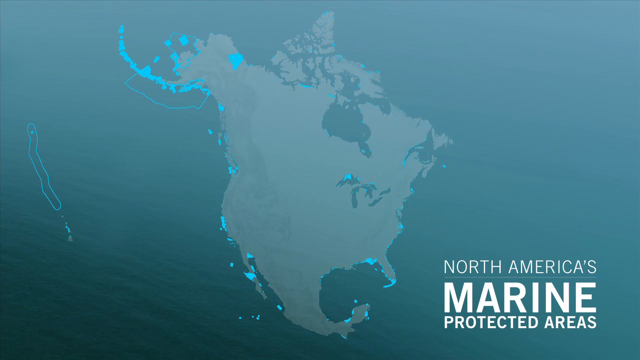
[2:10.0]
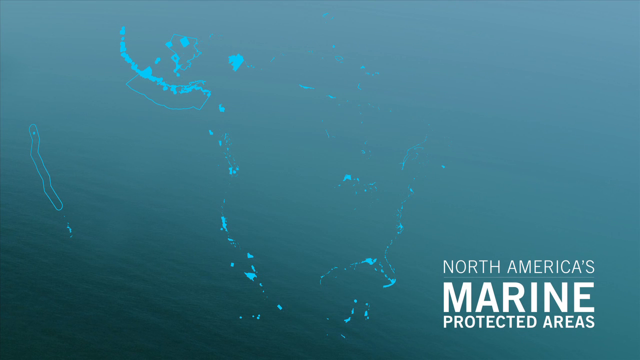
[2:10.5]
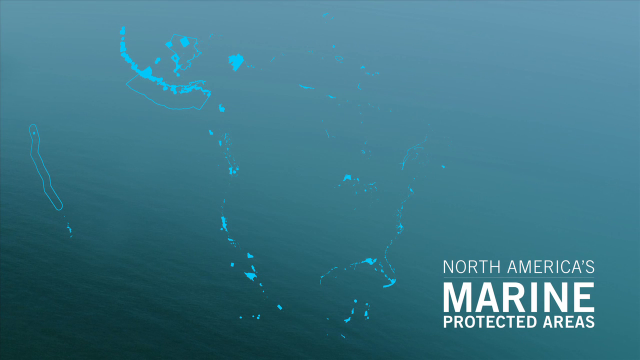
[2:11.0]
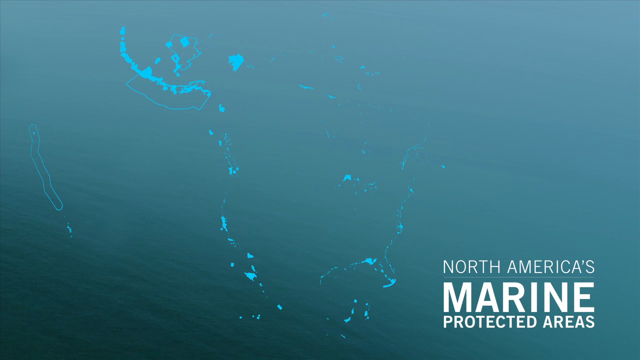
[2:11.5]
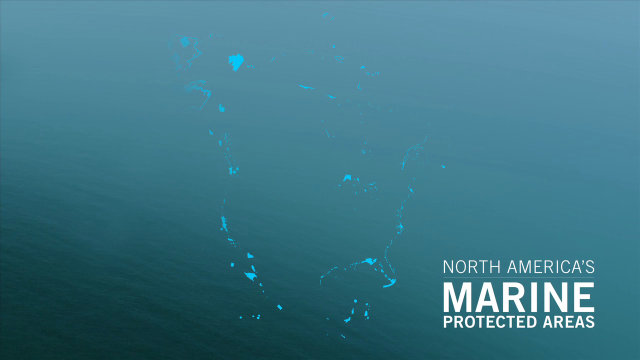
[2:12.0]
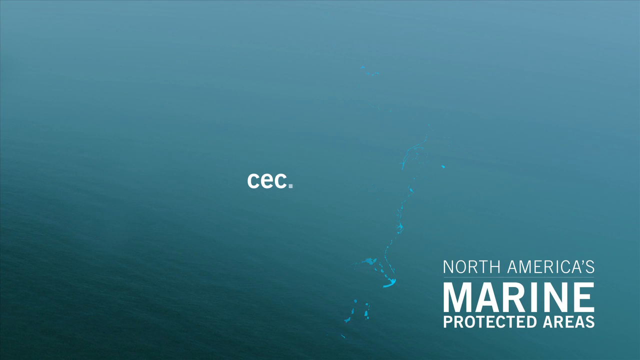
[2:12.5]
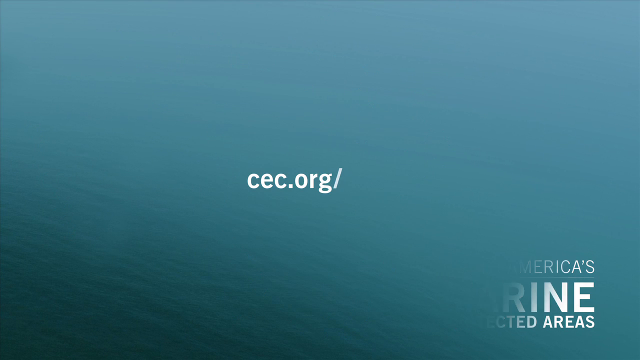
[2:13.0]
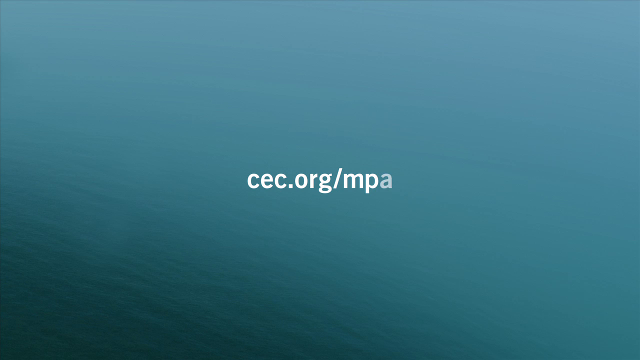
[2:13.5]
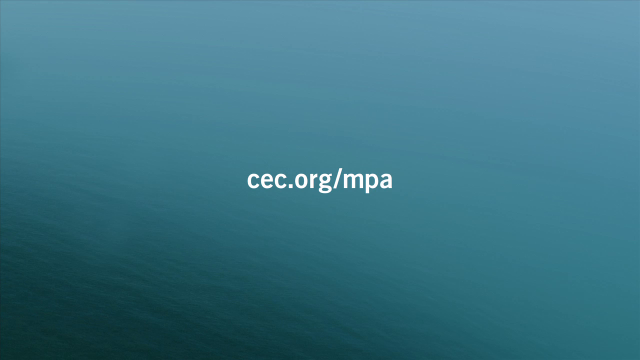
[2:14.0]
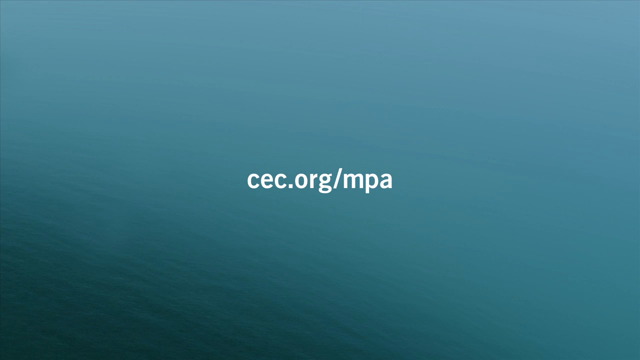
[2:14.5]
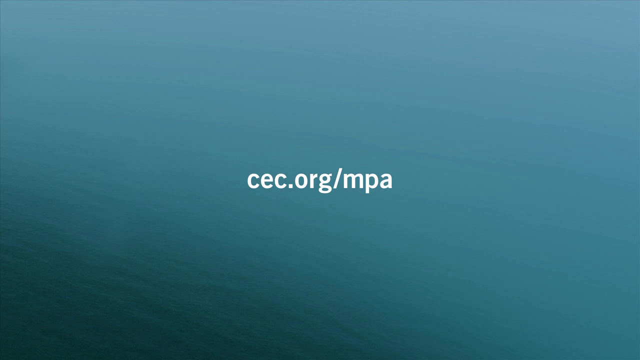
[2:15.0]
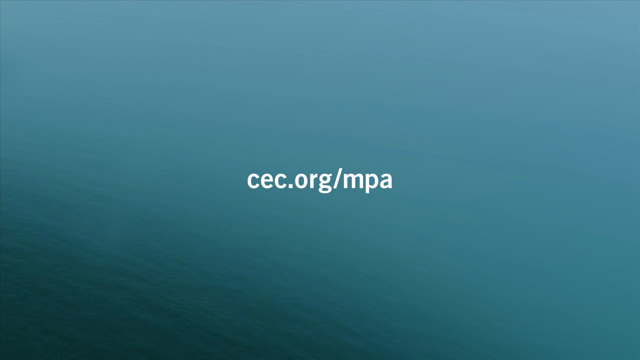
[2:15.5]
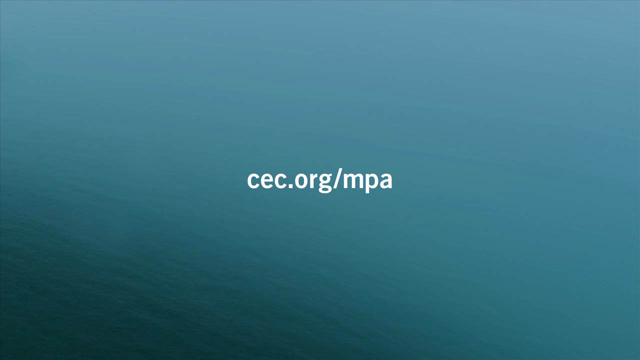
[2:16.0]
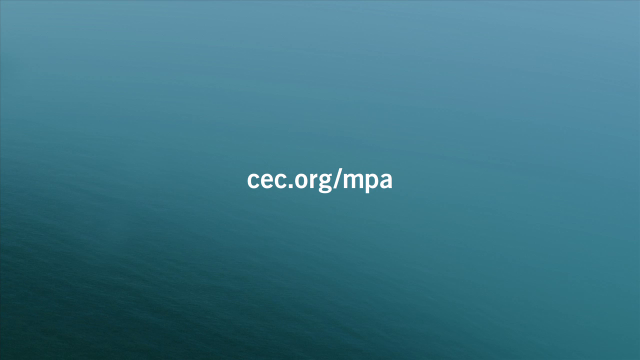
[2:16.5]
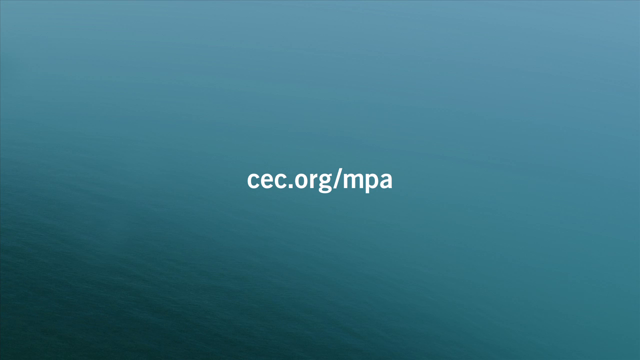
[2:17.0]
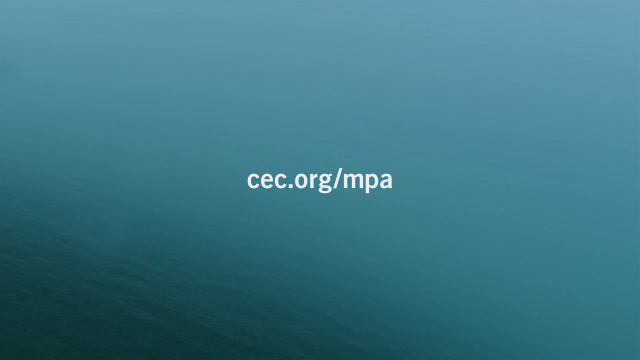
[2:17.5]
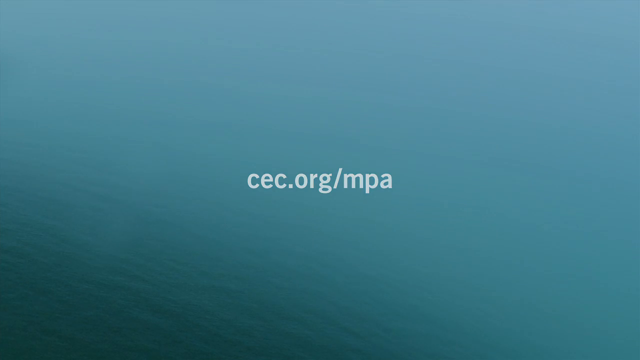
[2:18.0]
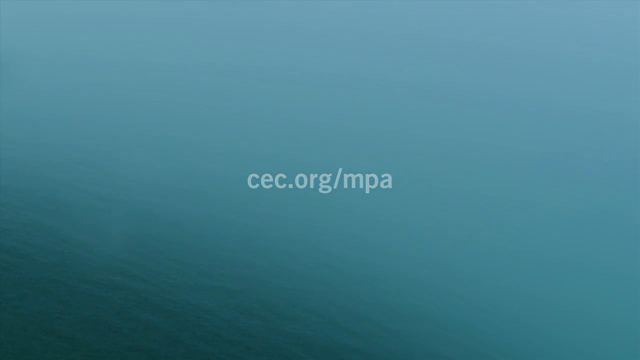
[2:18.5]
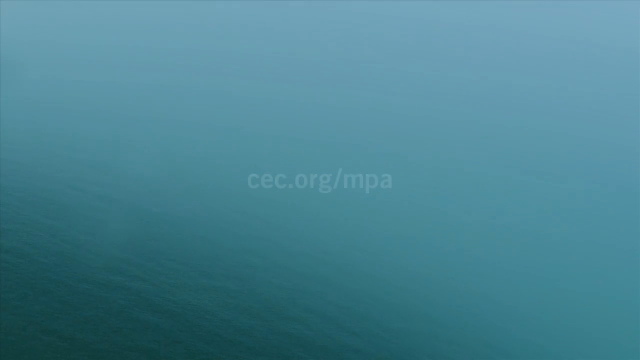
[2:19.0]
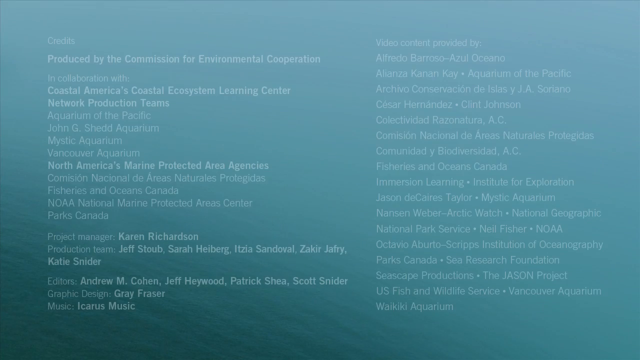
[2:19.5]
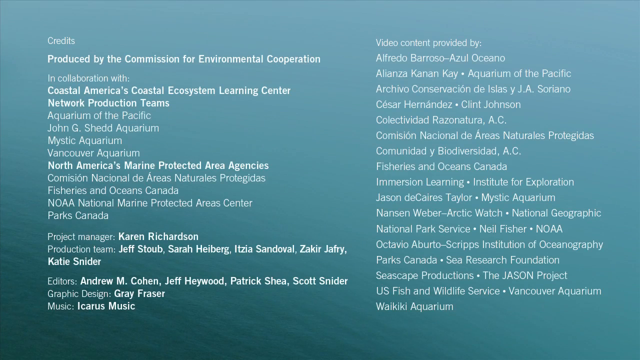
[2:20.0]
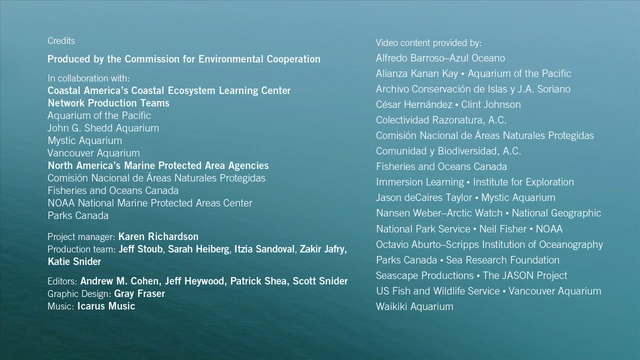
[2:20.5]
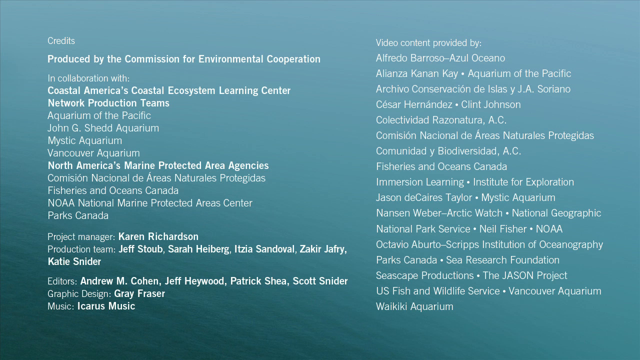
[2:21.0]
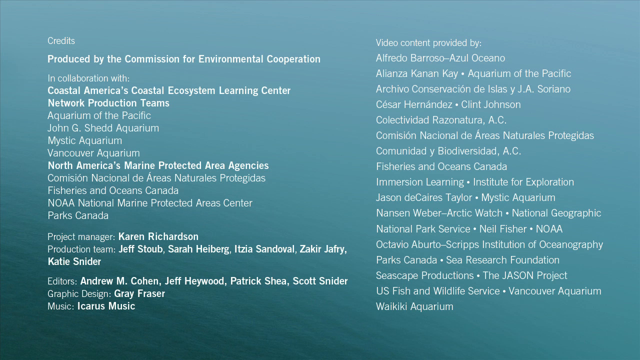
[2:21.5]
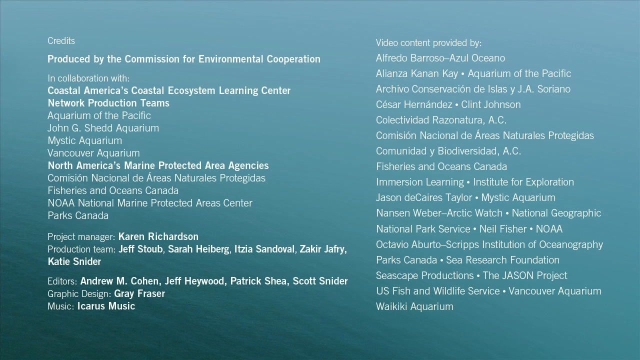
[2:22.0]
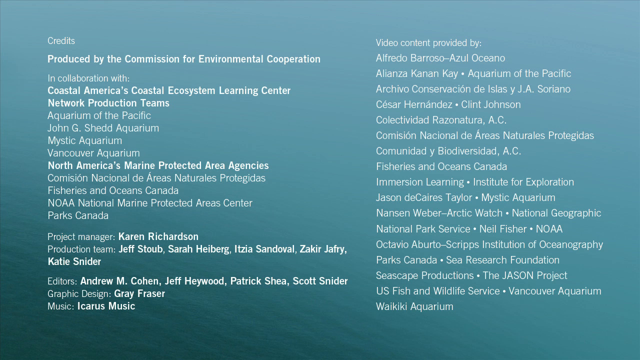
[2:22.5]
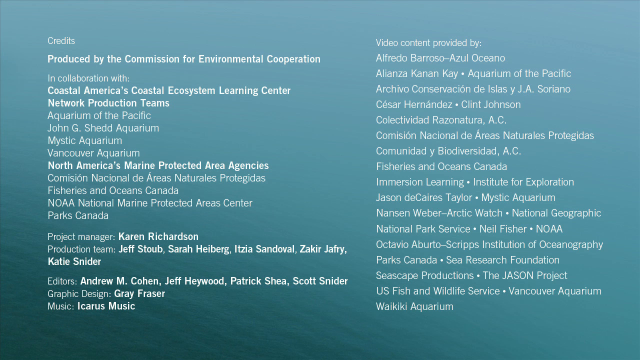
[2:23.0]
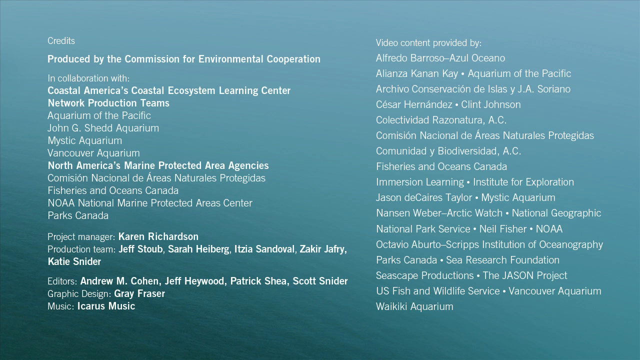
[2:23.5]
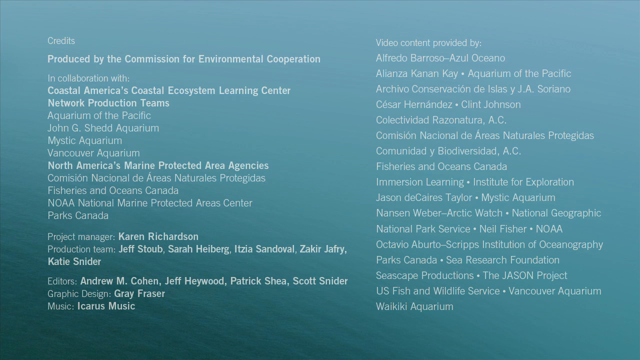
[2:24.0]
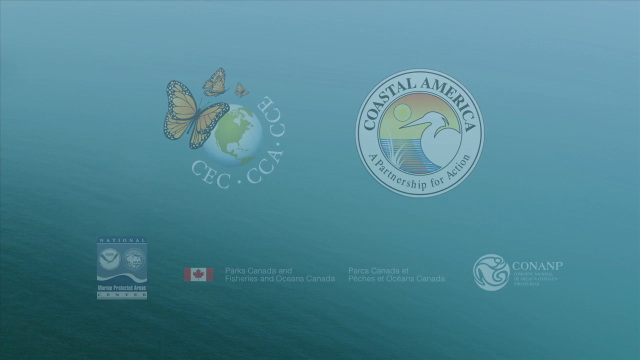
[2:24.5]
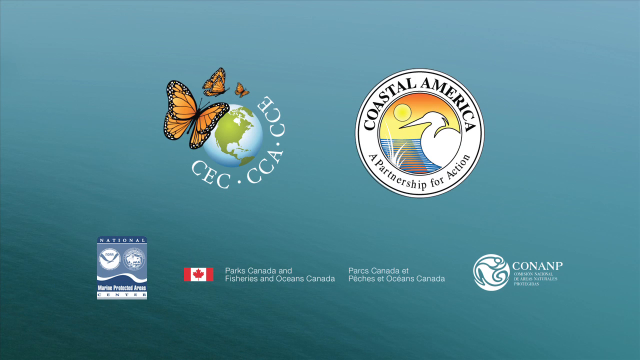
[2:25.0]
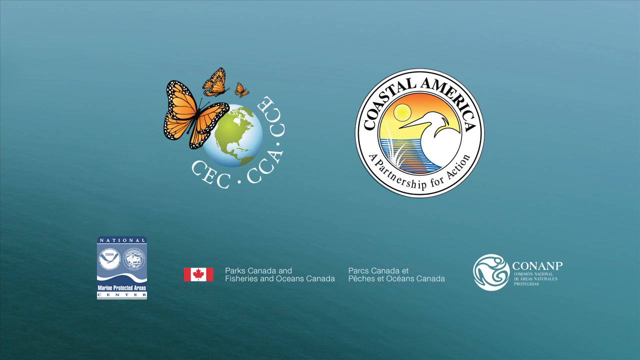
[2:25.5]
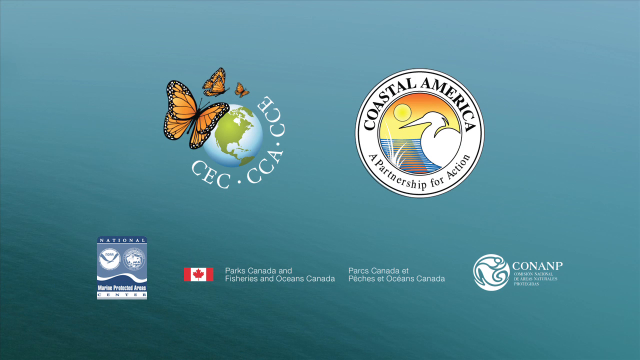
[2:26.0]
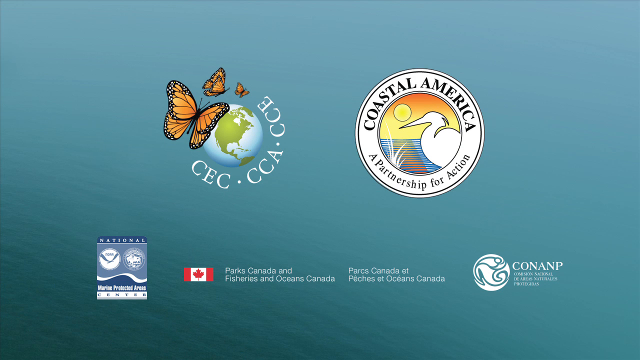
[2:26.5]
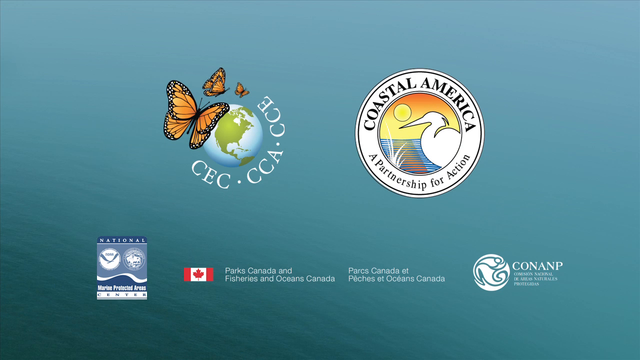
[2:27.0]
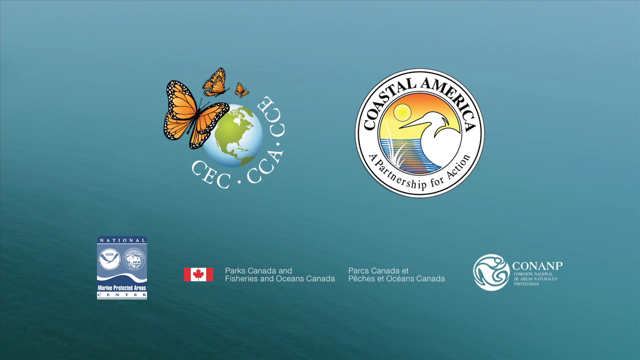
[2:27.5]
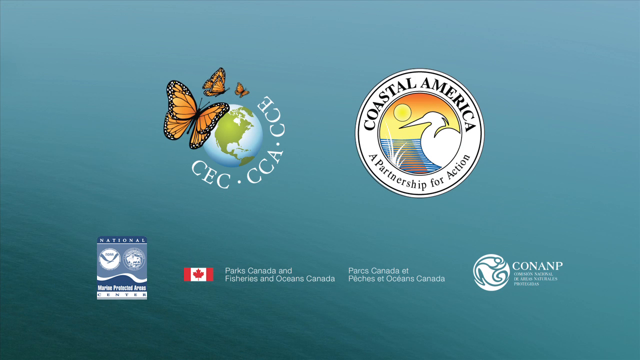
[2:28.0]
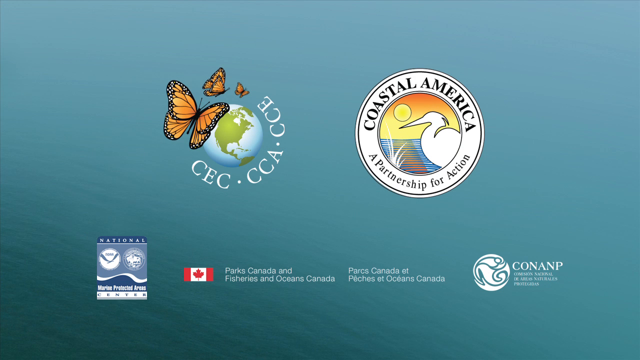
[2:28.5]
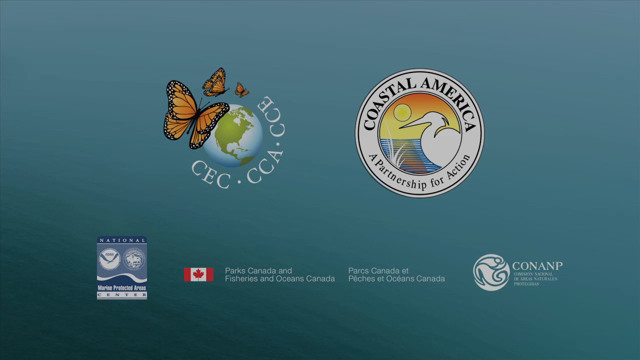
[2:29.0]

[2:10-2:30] The North American continent is white with some gray patches and some very bright blue areas, and in the very right corner are the words "North America's marine protected areas." The rest of the continent then disappears, leaving the blue parts, which are the marine protected areas. An organization's website comes up: "CEC.org/MPA." Credits follow: "produced by the Commission for Environmental Cooperation," then collaborators including Coastal America's Coastal Ecosystem Learning Center, Network Production Teams, Aquarium of the Pacific, John G Shedd Aquarium, Mystic Aquarium and Vancouver Aquarium. The project manager is listed as Karen Richardson, along with the production team, editors, graphic design and music, then the video content providers with a bunch of different names. Logos pop up, including the Coastal America logo with "a partnership for action," and those of a bunch of other organizations.